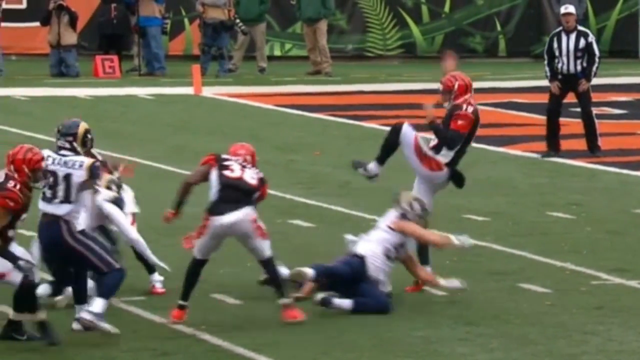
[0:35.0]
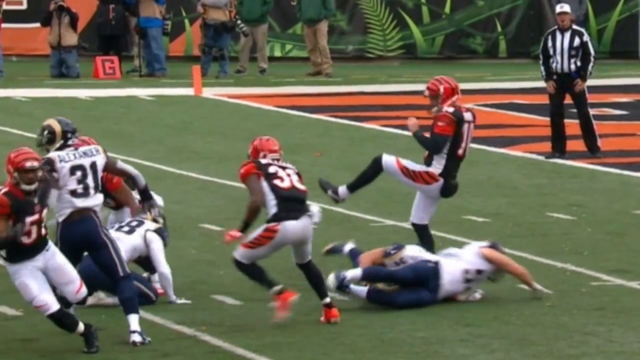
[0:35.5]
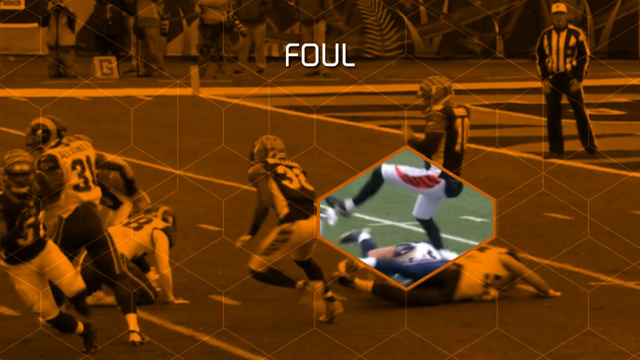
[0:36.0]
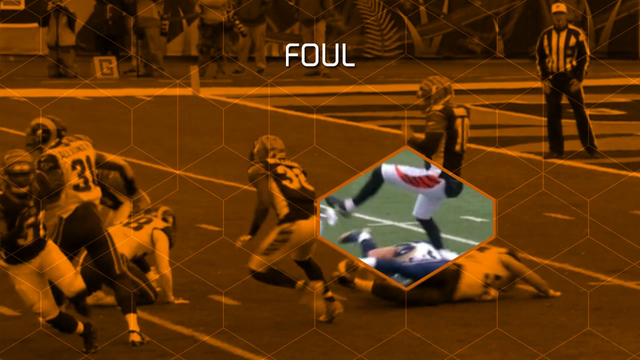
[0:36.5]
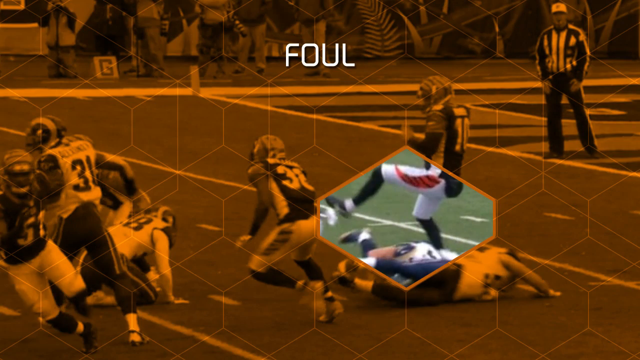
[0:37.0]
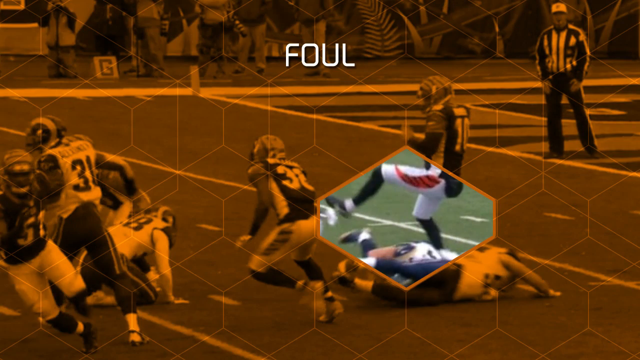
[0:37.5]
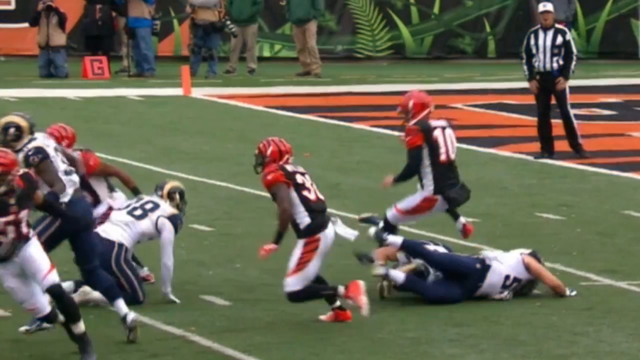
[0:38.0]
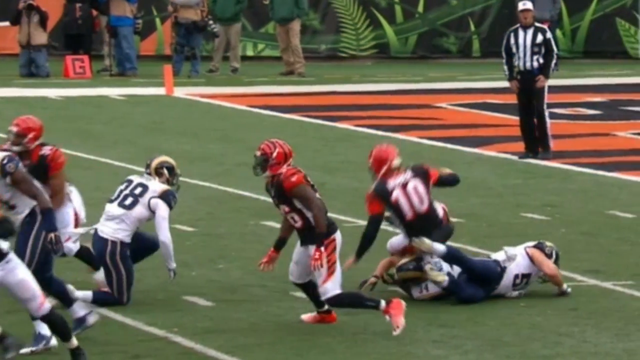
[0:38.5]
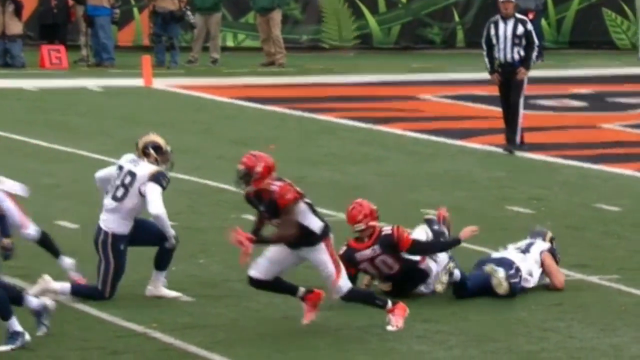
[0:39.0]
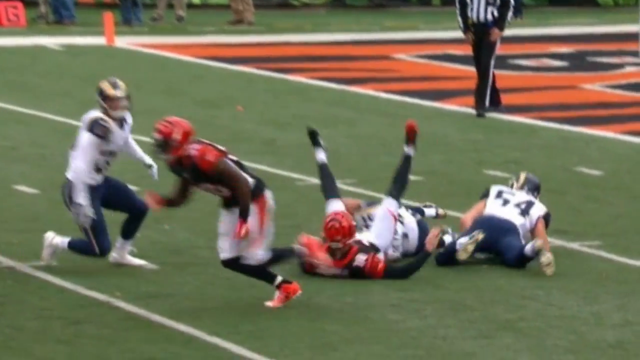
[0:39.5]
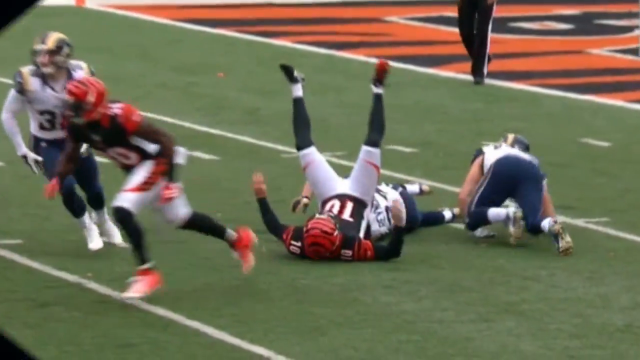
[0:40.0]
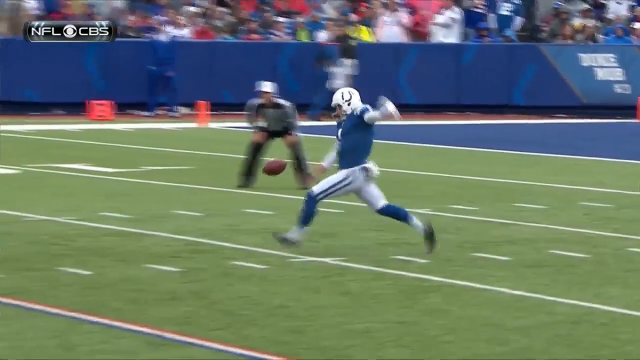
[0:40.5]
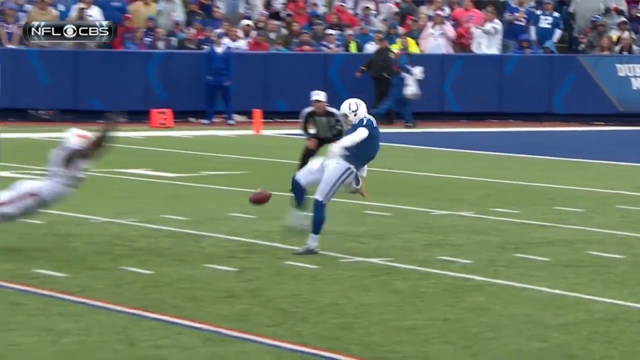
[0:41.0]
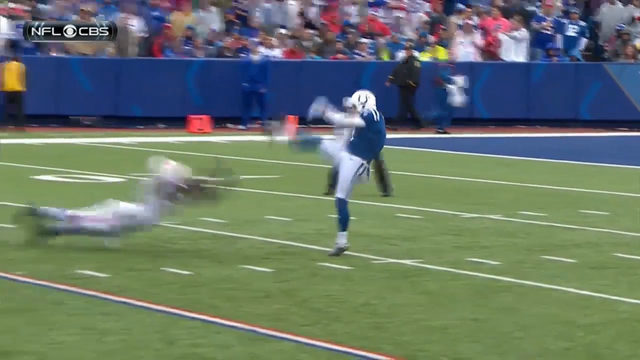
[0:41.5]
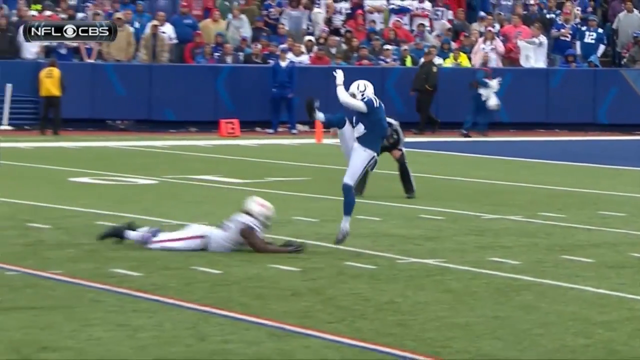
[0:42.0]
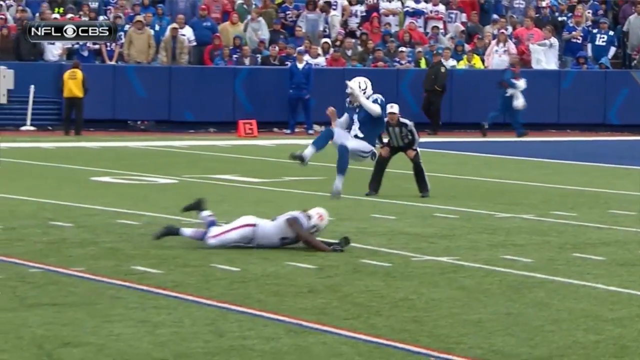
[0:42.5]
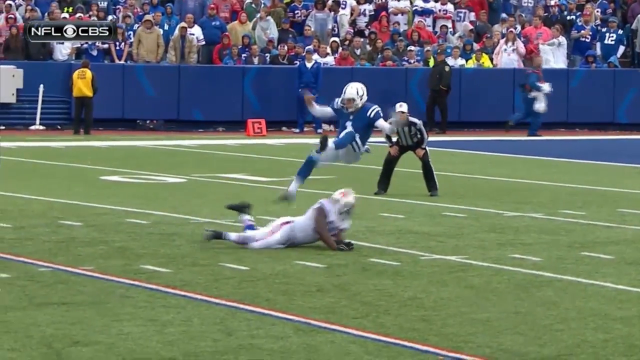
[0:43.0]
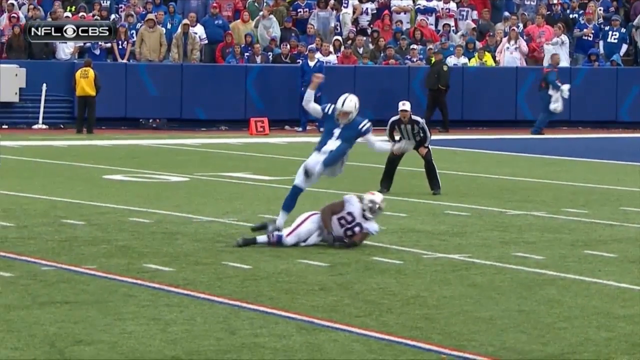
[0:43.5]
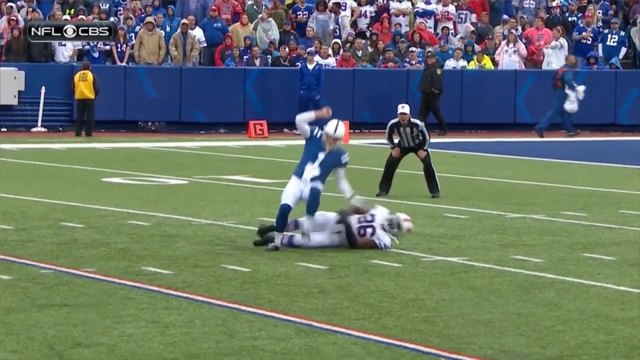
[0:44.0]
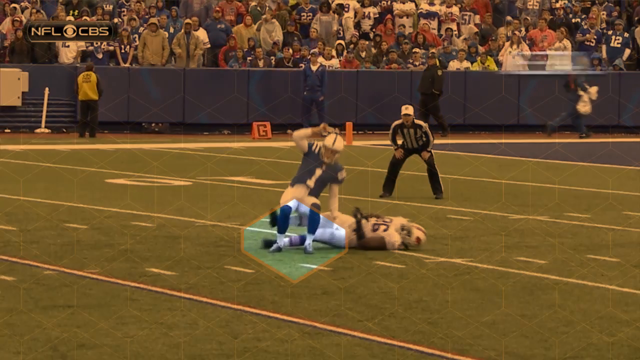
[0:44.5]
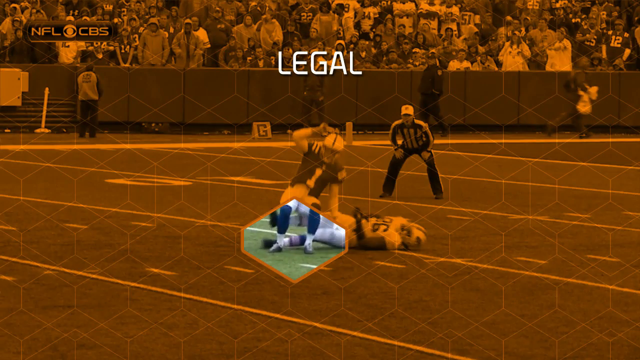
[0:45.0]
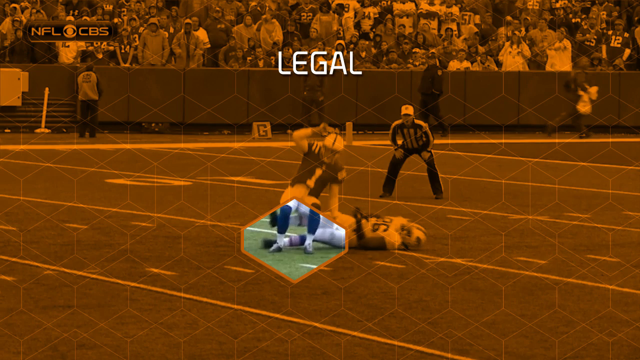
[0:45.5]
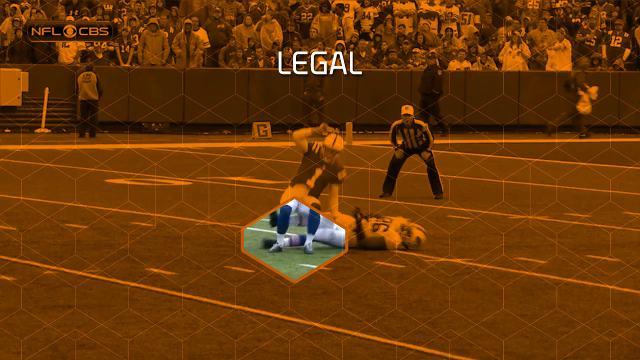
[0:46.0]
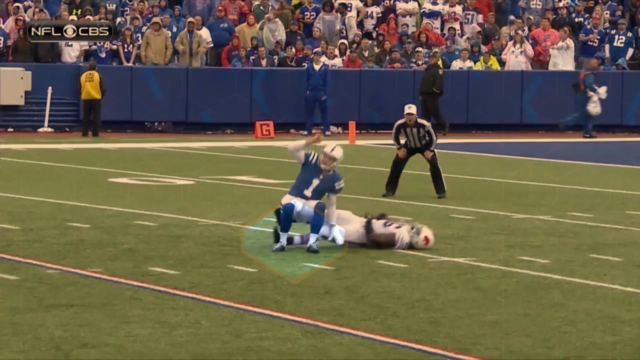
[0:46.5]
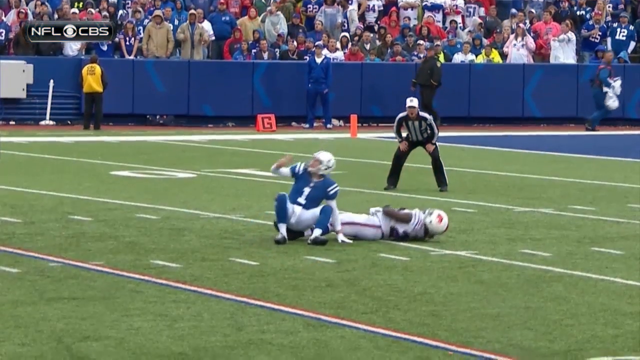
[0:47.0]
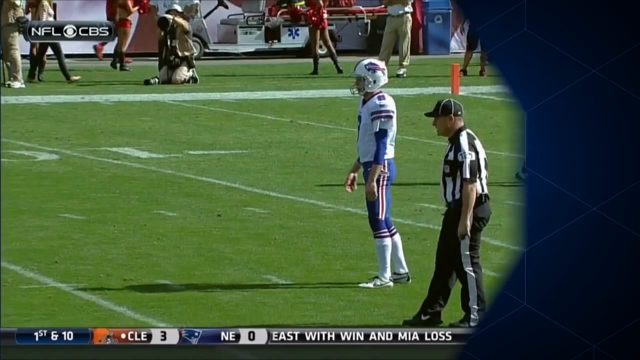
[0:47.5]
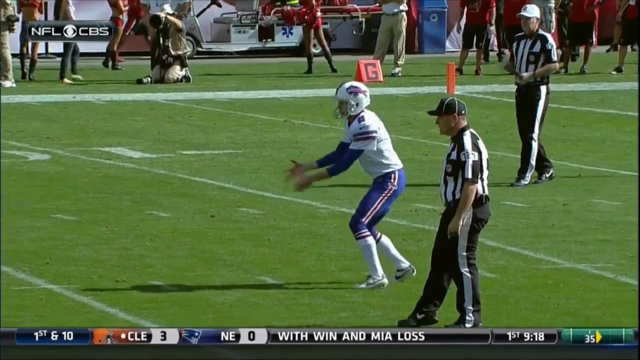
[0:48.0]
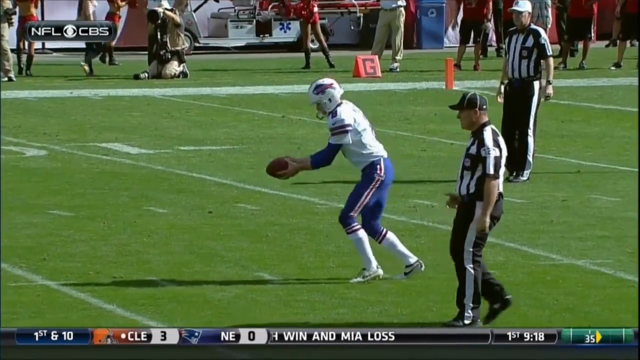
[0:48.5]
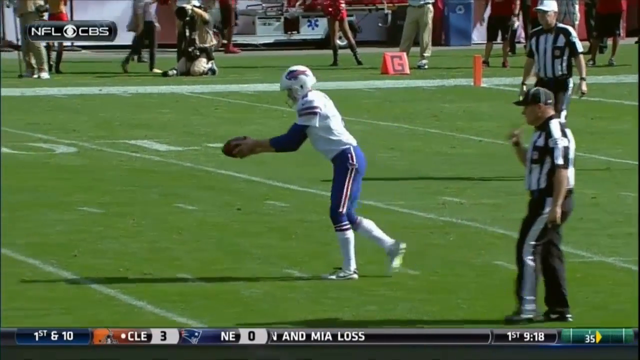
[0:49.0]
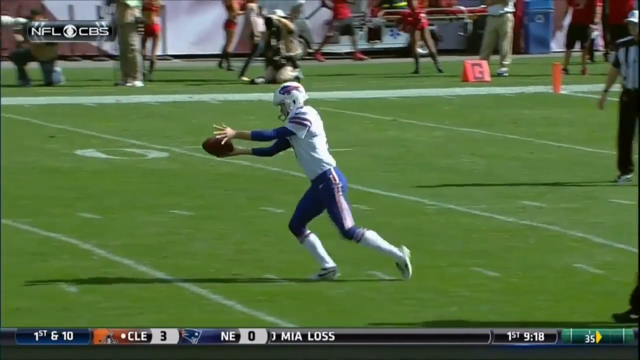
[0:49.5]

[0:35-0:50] At the end of the Bengals and Rams play, the punter gets hit, and the moment is highlighted with "foul." The video then pans to a Colts play. The Colts player receives the ball at his own 12-yard line, takes two steps, and punts it. Apparently a Bills player comes through and kind of dives at him to try to block the punt, but he is late and the ball has already been punted, so the punter kind of goes over the top of him. The same orange background and a diamond pop up, this time saying "legal," because the player did not contact him. Next, a Bills punter receives the ball around his 12-yard line, takes two steps, and punts it, where the play cuts off.